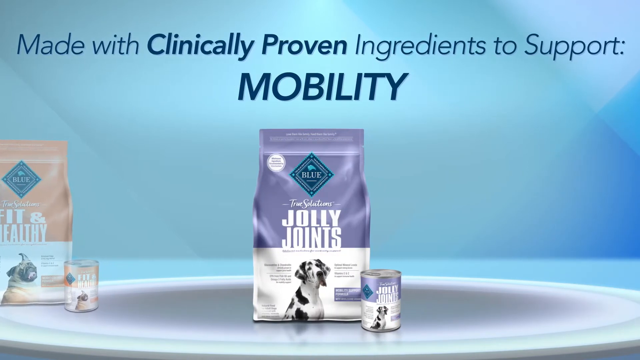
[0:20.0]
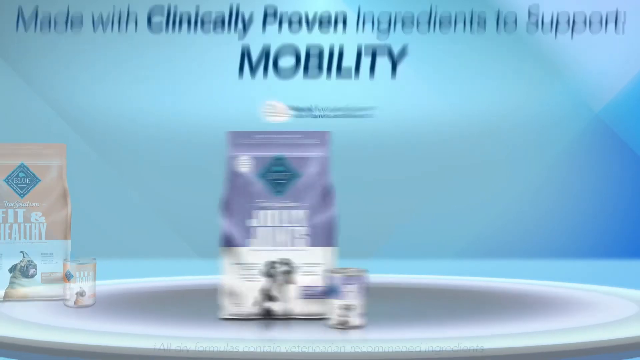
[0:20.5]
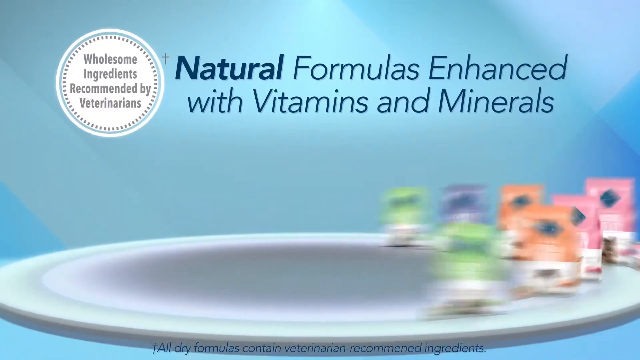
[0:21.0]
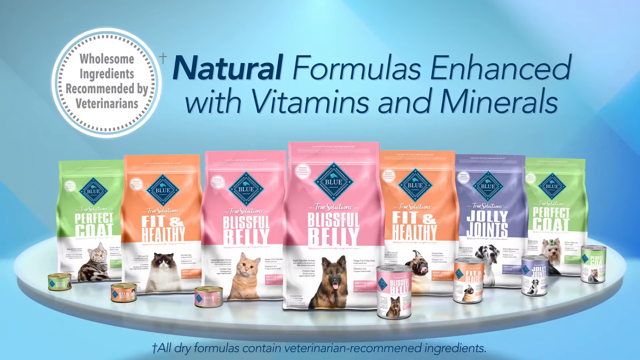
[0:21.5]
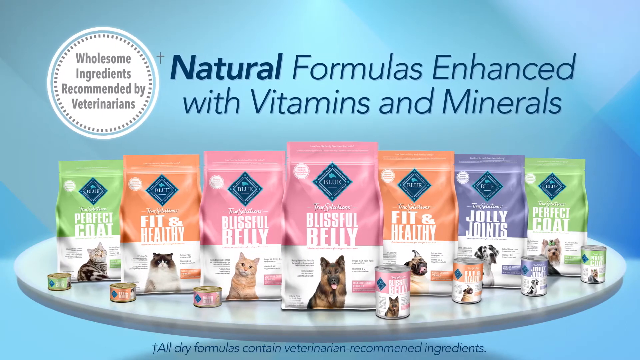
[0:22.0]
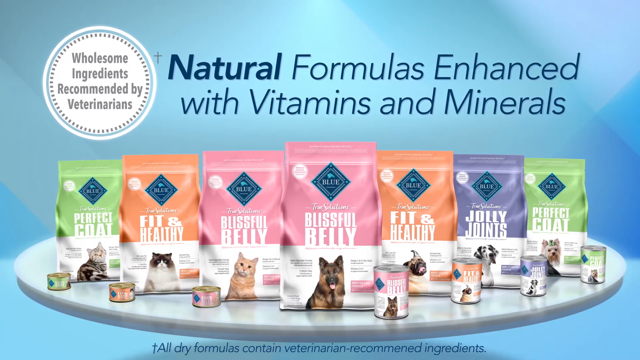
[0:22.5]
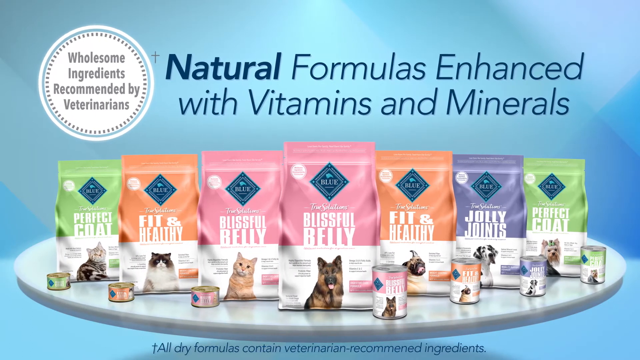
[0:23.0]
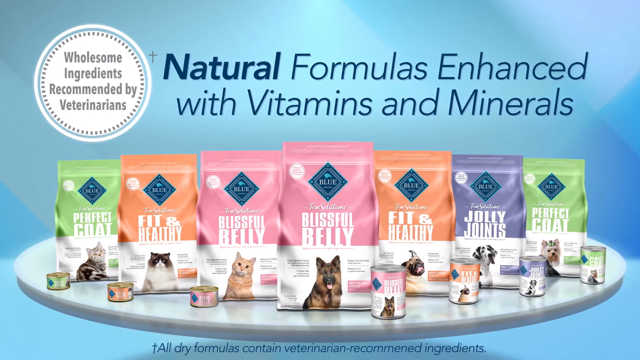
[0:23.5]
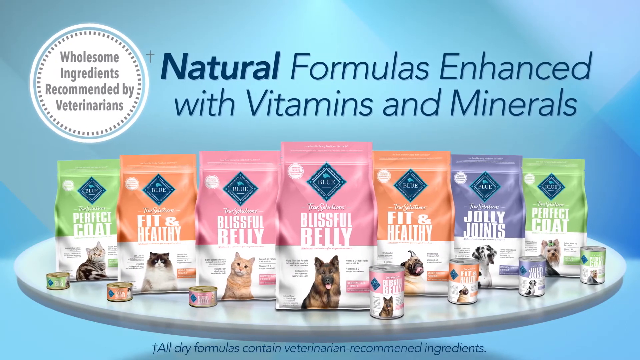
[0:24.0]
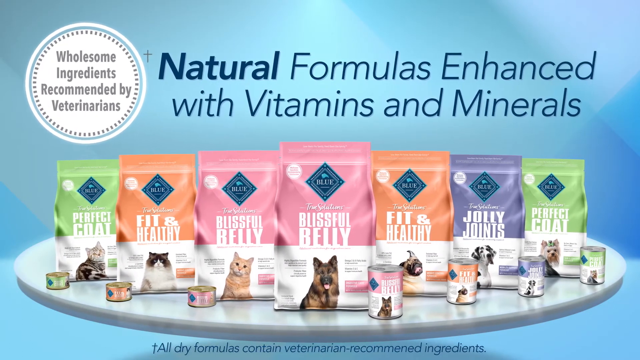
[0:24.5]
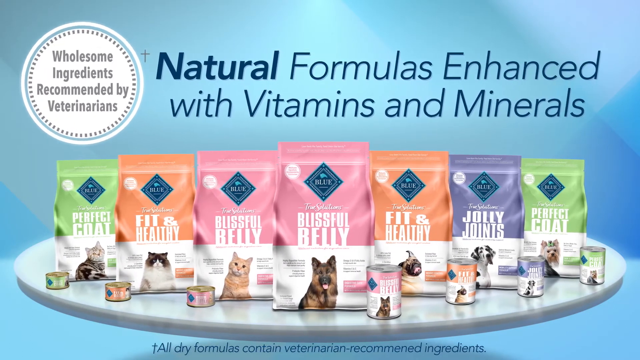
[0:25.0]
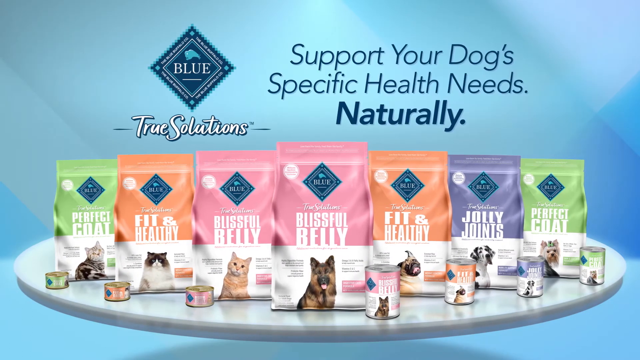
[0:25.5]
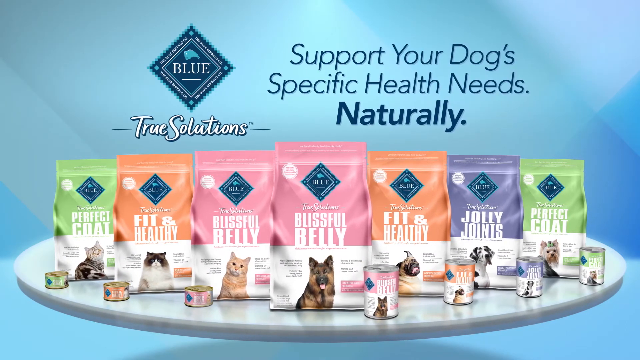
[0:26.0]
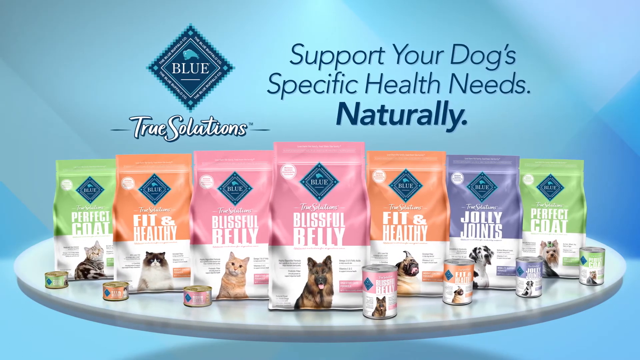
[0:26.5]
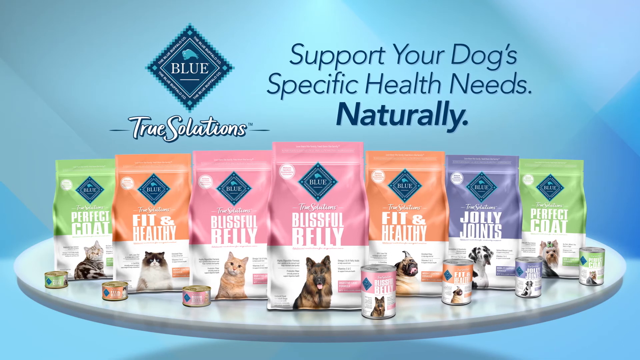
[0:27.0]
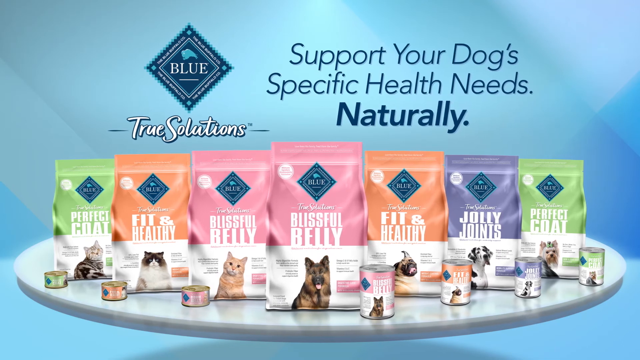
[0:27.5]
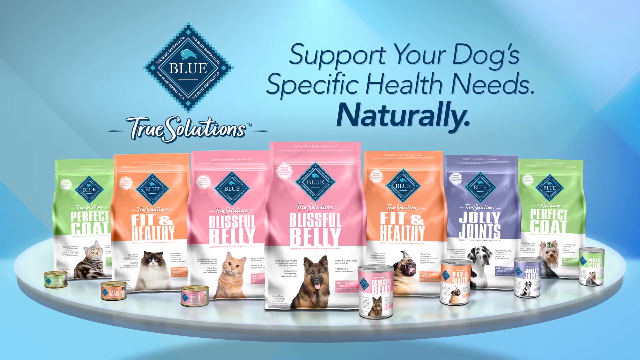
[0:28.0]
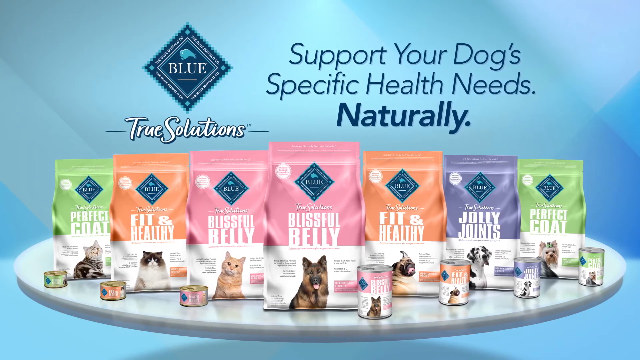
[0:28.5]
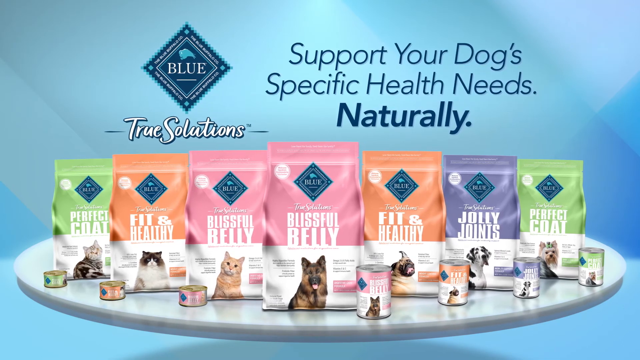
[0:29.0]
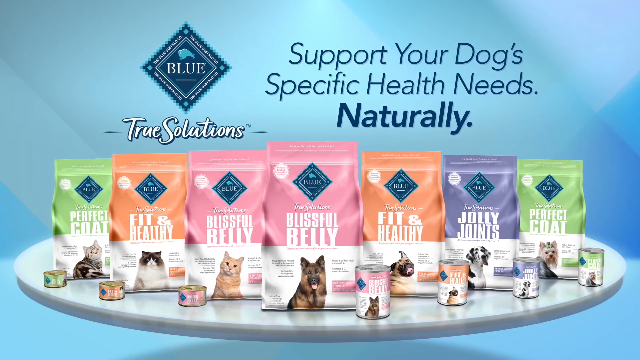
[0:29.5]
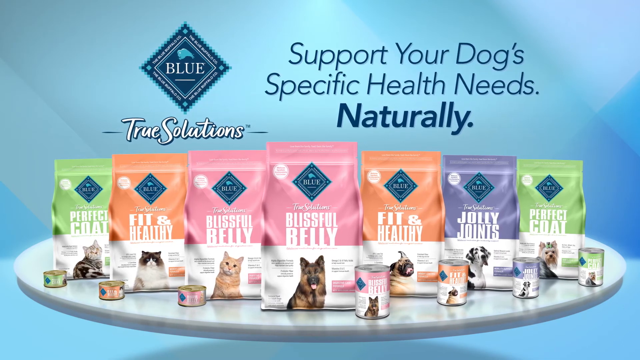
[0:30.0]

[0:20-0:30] A transition leads to seven bags of pet food with seven cans of pet food standing next to their corresponding bags. All the bags and cans appear on an empty, large white plate against a light blue background. The words "natural formulas enhanced with vitamins and minerals" appear over all seven bags. In the upper left-hand corner is a large white circle with black dots around it and a light blue circle around it, which says "wholesome ingredients recommended by veterinarians." New products have been added: the four bags seen earlier are now on the right. On the left is a green and white bag of cat food that says "perfect coat," and to its right is an orange and white bag of cat food that states "fit and healthy." A pink and white bag of cat food has the words "blissful belly" written on it.